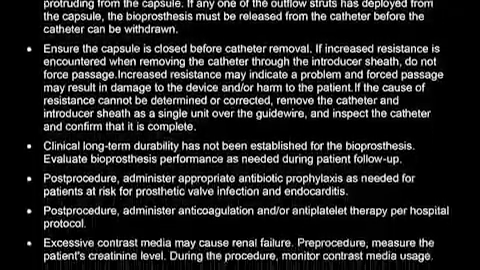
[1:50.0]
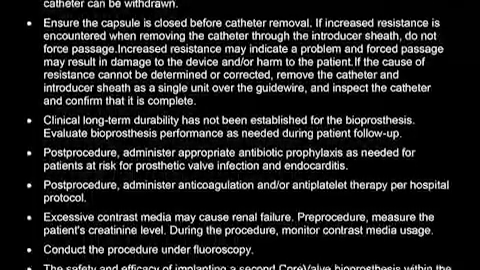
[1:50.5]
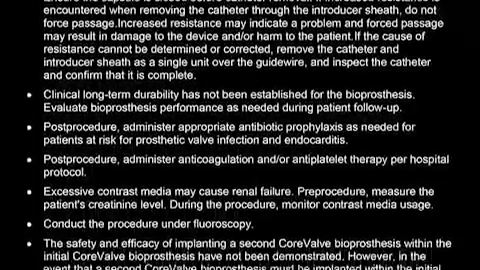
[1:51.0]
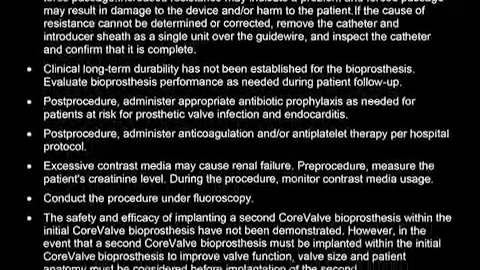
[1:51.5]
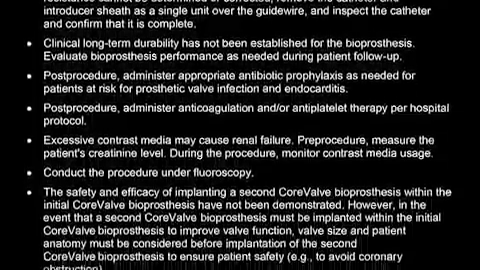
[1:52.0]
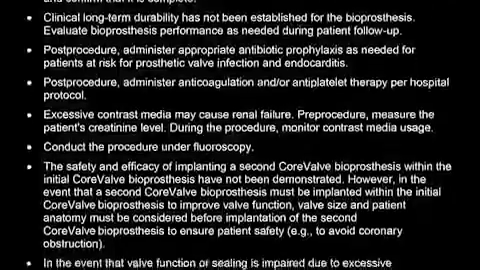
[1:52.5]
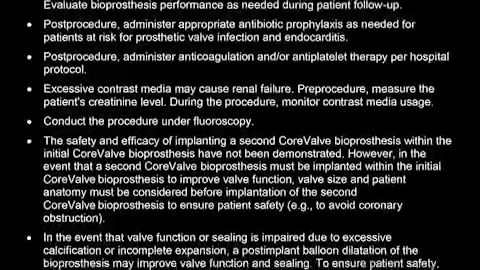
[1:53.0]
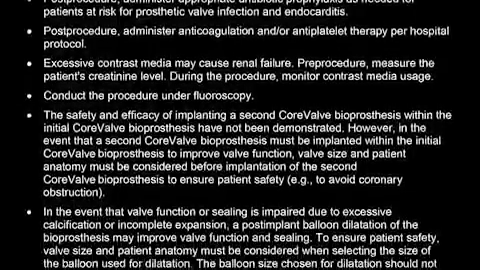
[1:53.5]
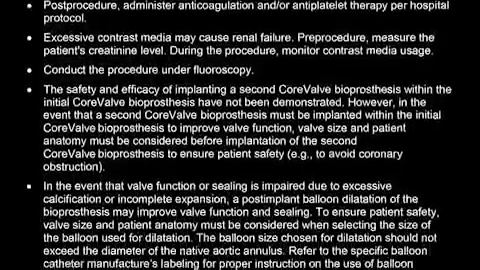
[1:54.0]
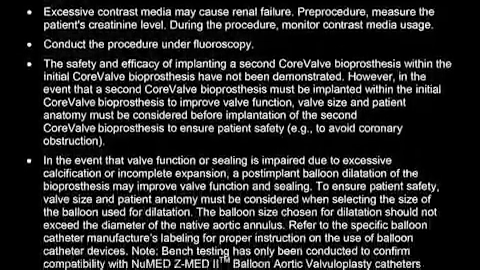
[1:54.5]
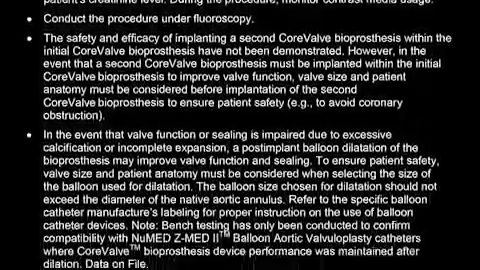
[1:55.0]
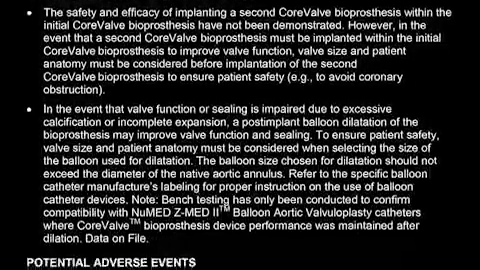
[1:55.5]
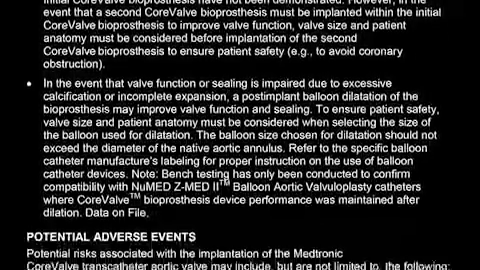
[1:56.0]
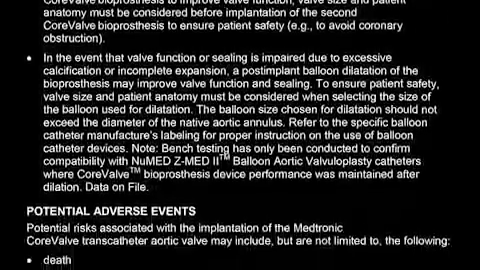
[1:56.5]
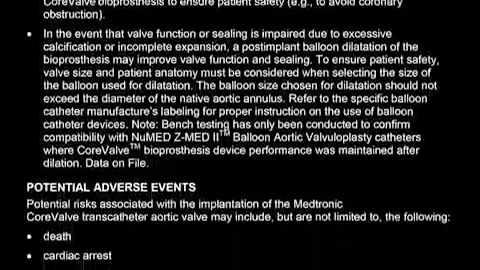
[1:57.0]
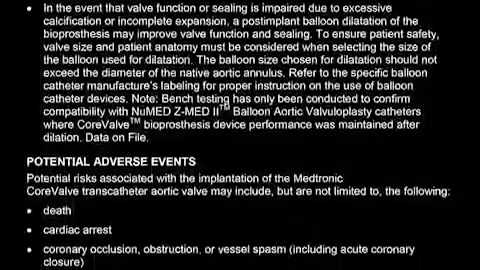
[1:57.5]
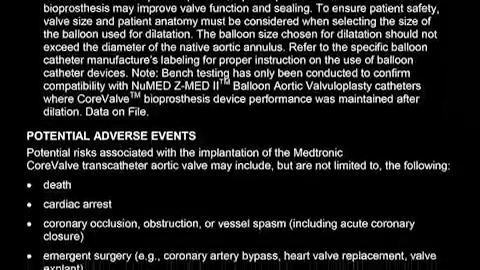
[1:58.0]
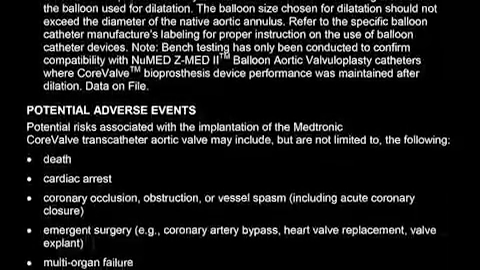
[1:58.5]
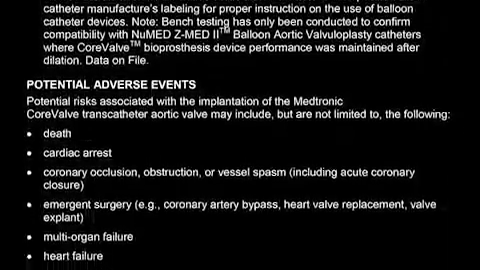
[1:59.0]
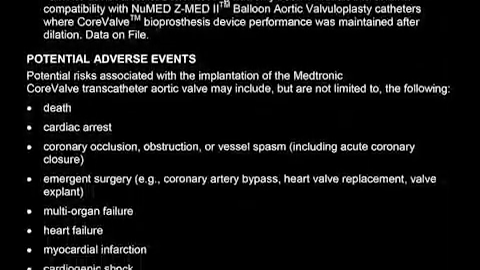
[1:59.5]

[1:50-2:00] Many bullet points appear on a completely black background, with the paragraphs in white; some bullet points have just a sentence or a couple of words. The text includes "potential adverse events" and reads "potential risks associated with the implantation of the Medtronic core valve, transcatheter, aortic valve may include but are not limited to the following," listing death, cardiac arrest, coronary occlusion, obstruction, emergency surgery, multi-organ failure, and heart failure.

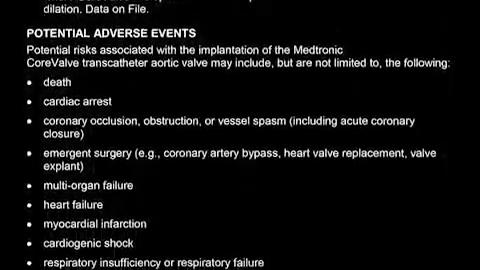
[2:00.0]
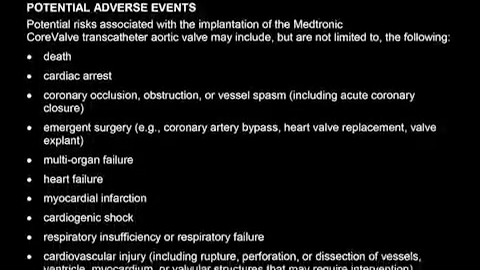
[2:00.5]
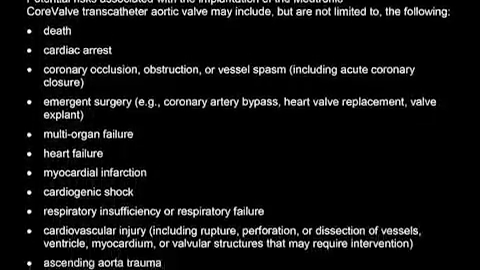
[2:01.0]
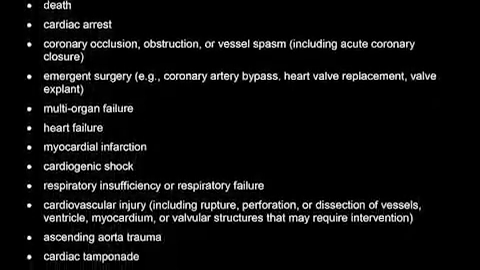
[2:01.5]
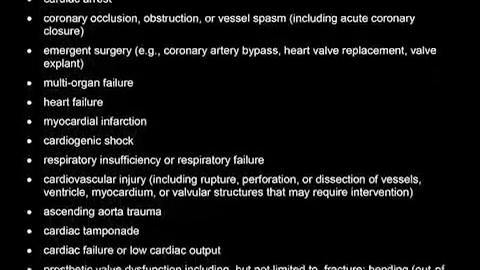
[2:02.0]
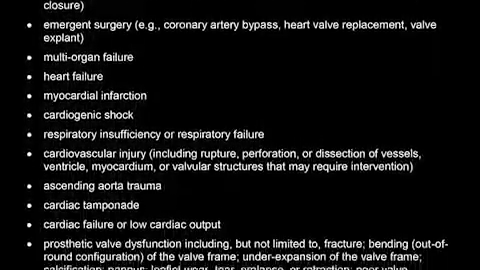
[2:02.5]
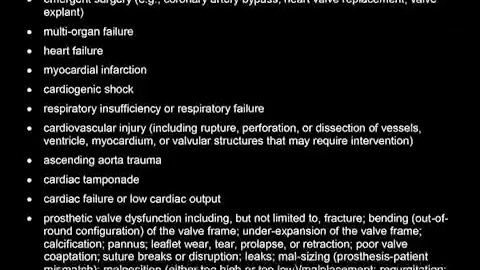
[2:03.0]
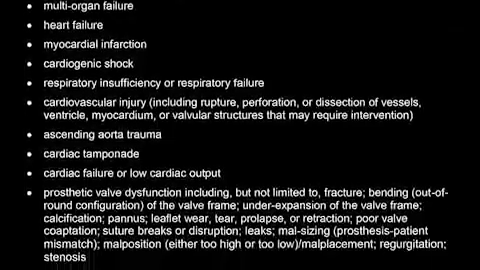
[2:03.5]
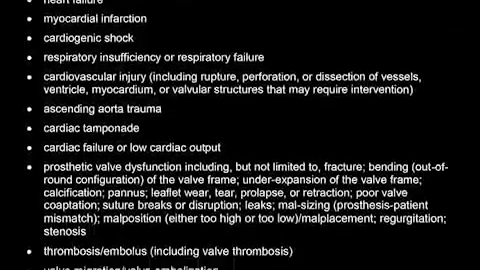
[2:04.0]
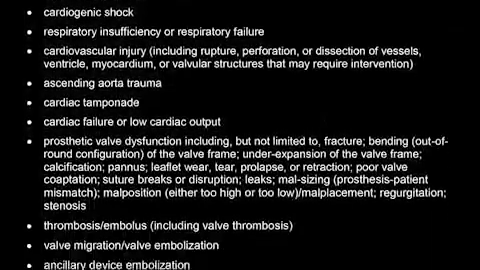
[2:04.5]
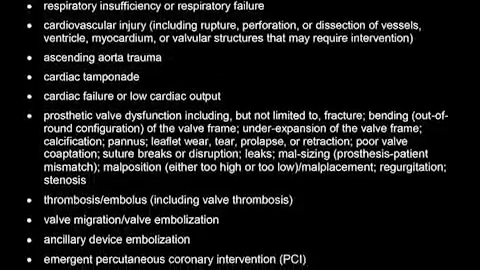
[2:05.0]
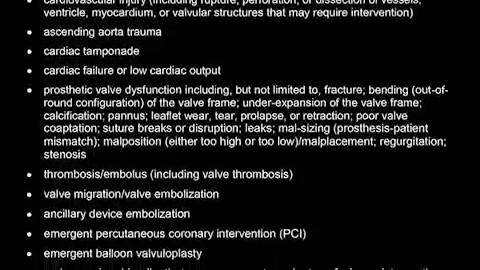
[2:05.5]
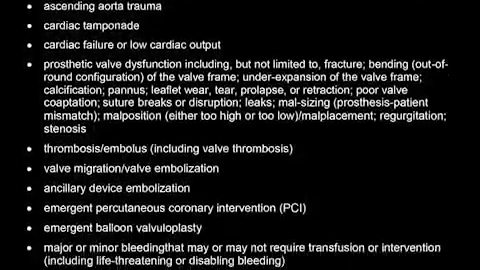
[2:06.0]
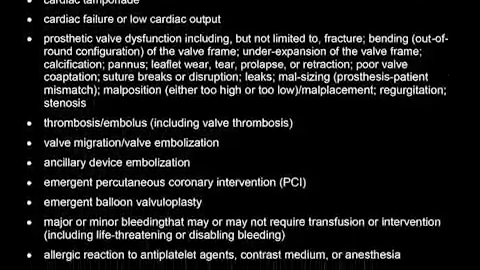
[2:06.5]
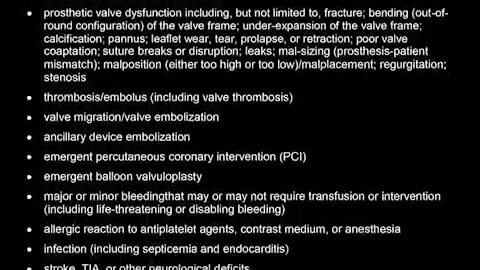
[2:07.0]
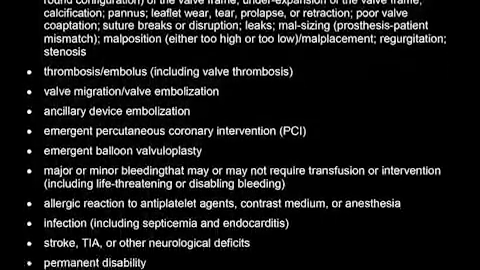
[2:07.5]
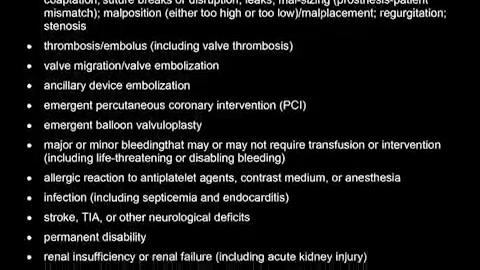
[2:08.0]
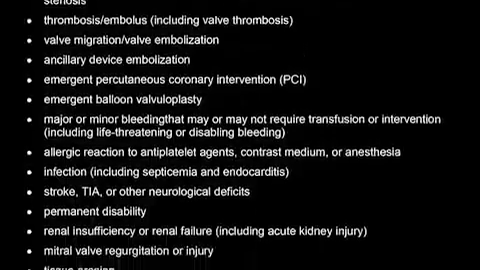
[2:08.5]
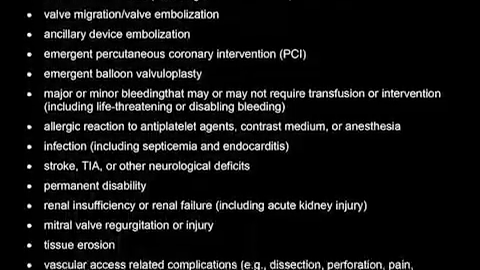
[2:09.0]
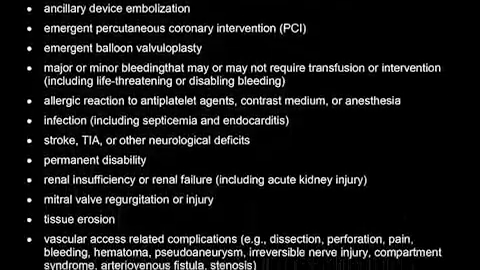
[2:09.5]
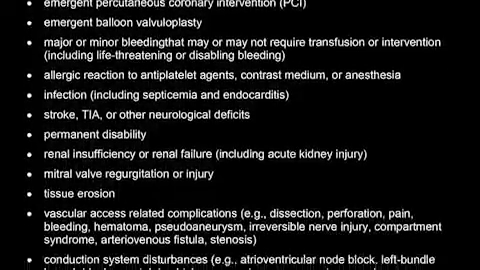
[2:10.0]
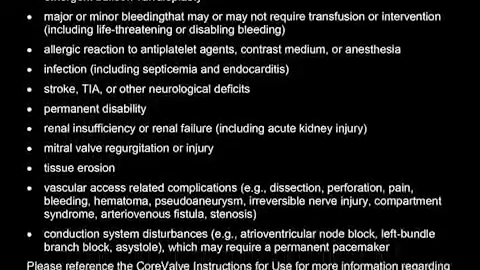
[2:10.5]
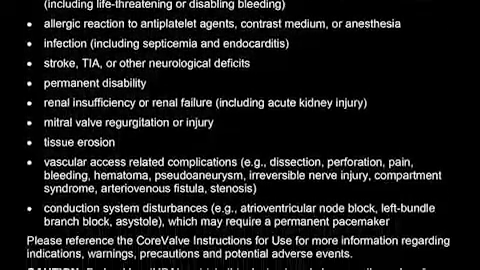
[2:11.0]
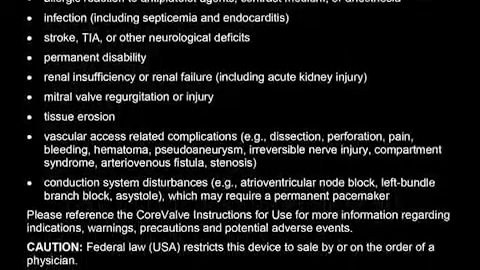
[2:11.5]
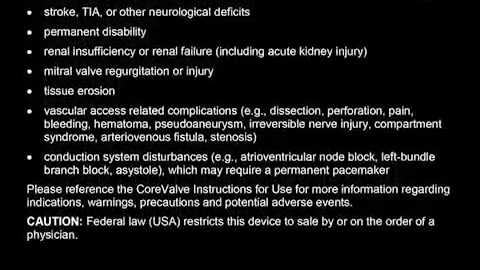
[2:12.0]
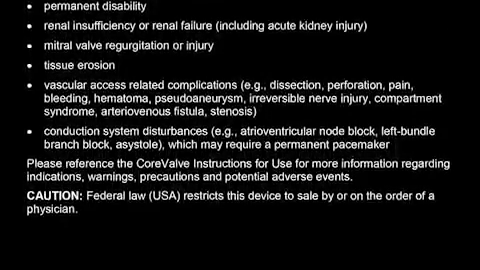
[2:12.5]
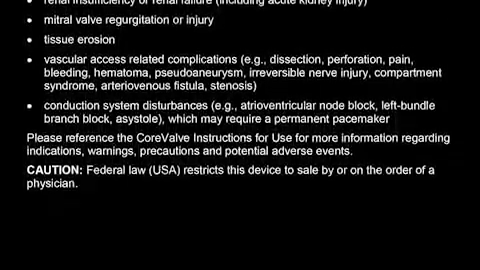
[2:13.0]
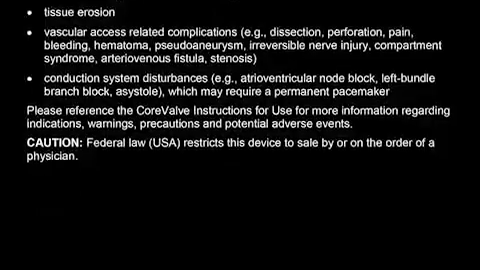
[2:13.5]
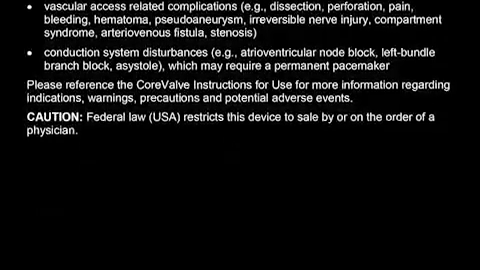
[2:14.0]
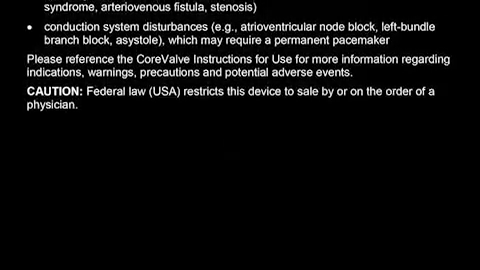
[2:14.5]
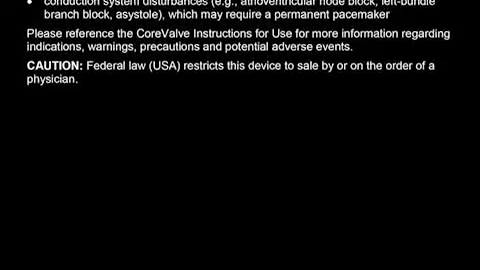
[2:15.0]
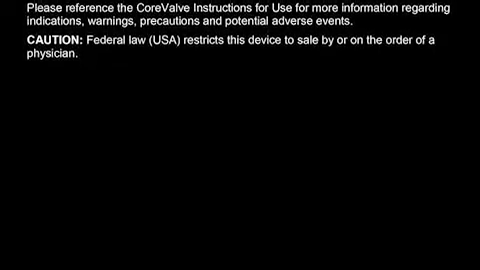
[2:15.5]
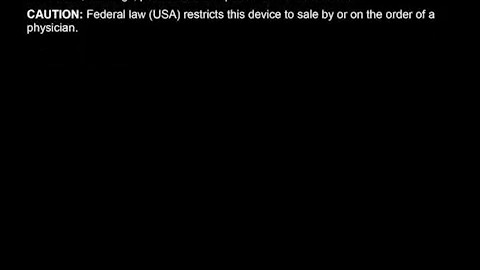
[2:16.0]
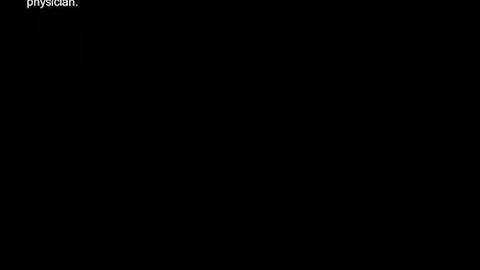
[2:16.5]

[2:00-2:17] Information on the side effects and the safety and efficacy of the core valve procedure is shown. An animation shows how the valve is inserted by going up through areas of the heart, with a tool that helps put it in and then holds it still while other areas of the heart kind of adapt around it. The view zooms out to show the whole heart beating. Medtronic and its website appear, and contraindications and warnings are listed.